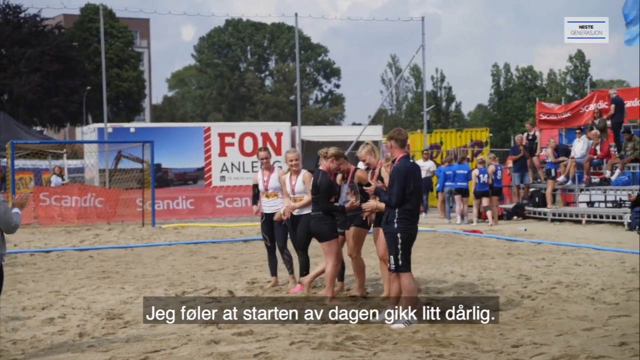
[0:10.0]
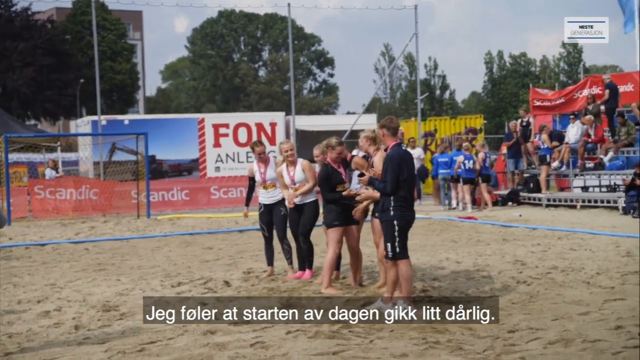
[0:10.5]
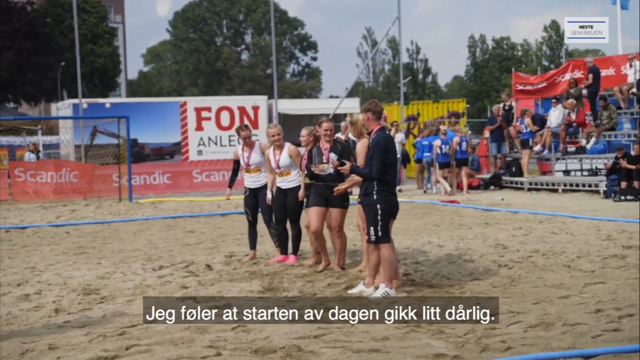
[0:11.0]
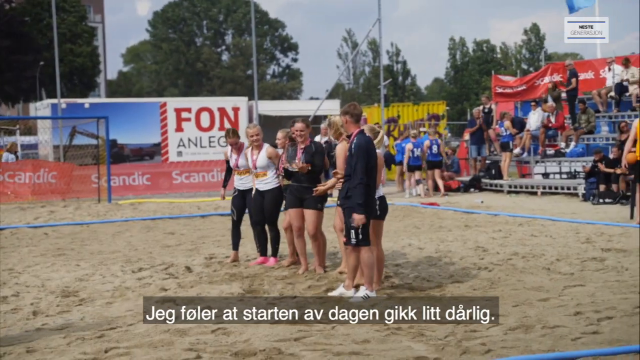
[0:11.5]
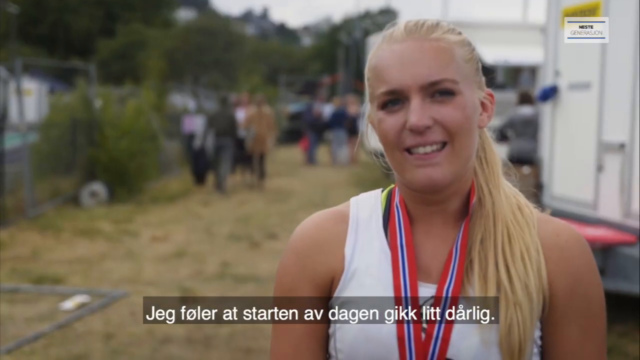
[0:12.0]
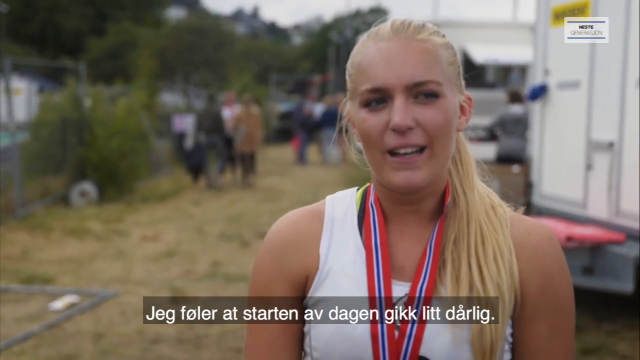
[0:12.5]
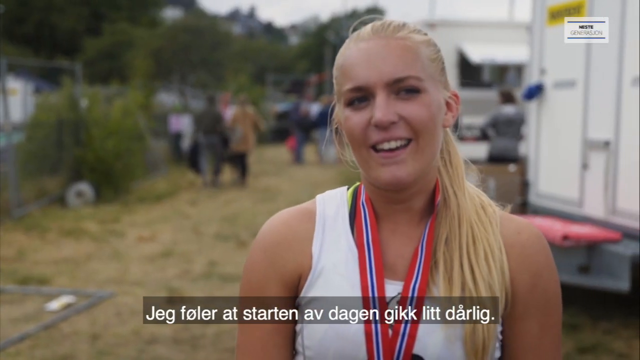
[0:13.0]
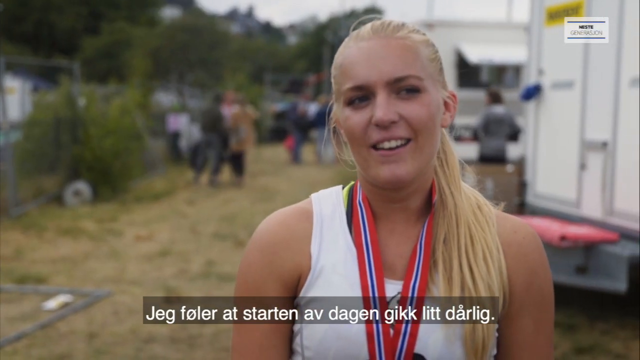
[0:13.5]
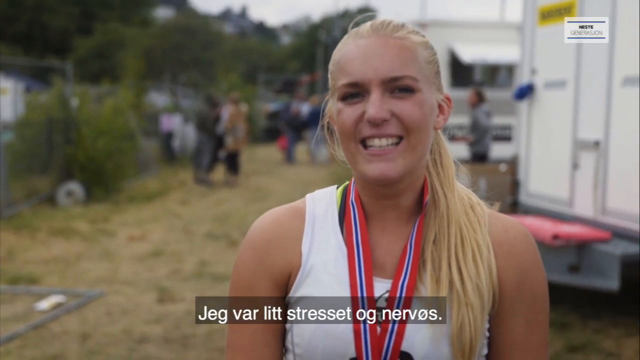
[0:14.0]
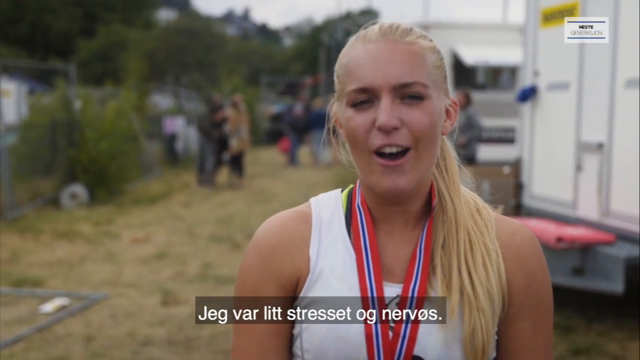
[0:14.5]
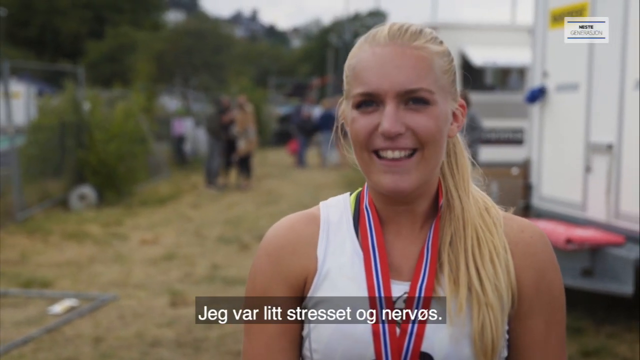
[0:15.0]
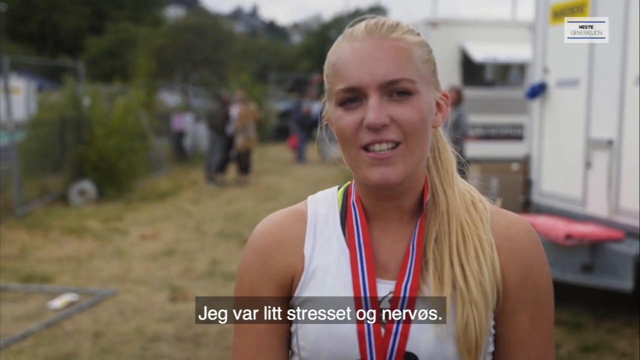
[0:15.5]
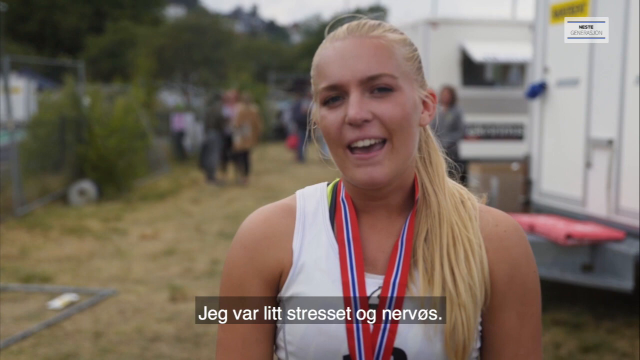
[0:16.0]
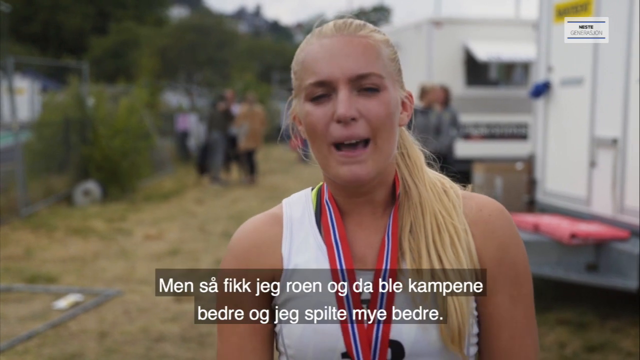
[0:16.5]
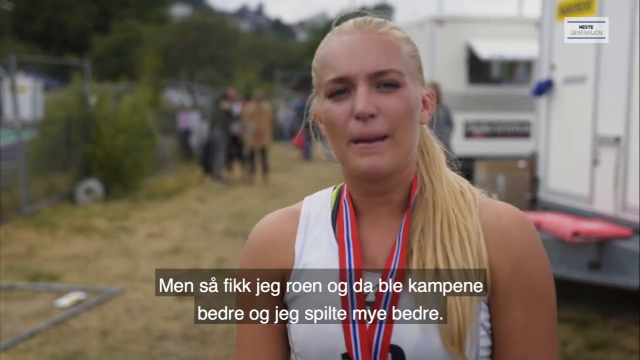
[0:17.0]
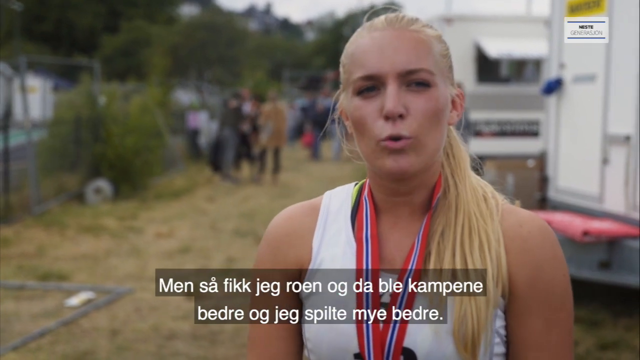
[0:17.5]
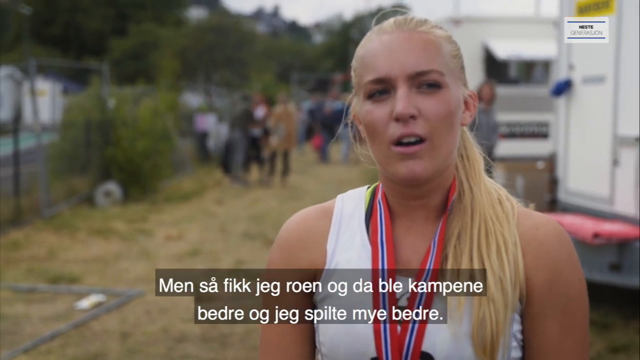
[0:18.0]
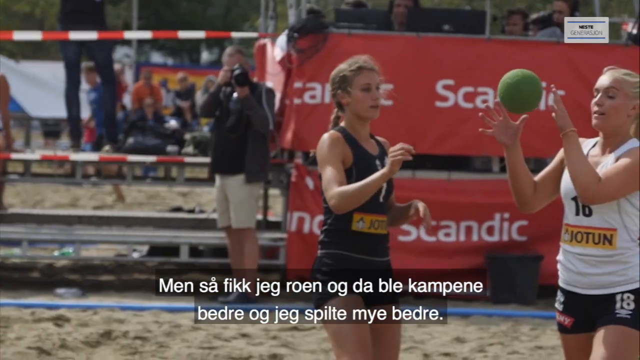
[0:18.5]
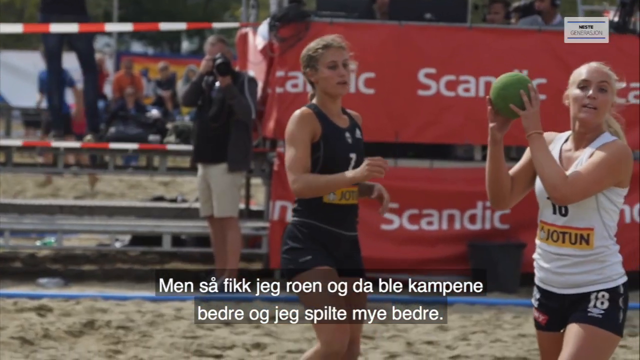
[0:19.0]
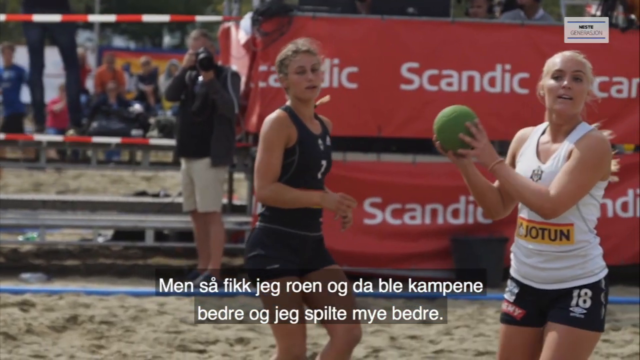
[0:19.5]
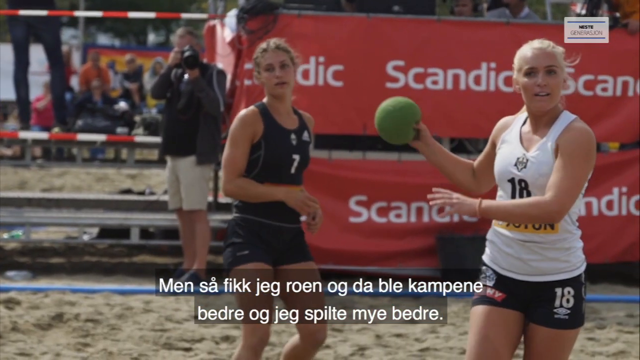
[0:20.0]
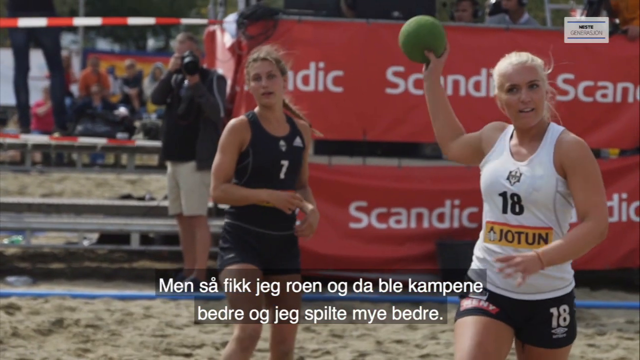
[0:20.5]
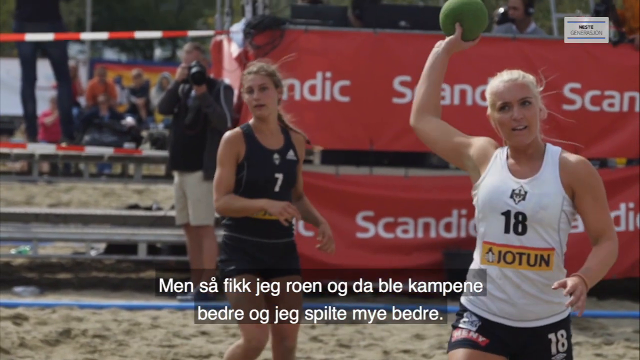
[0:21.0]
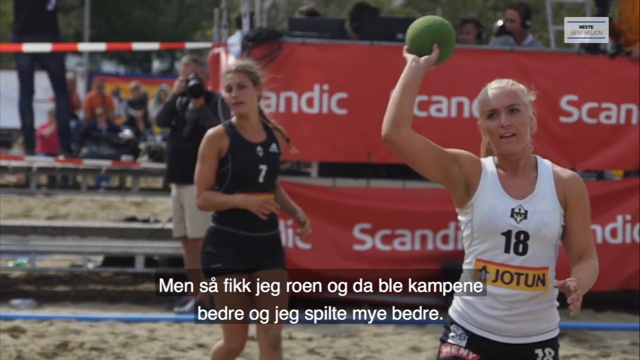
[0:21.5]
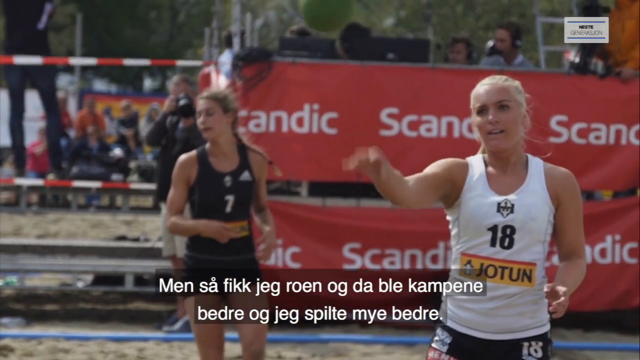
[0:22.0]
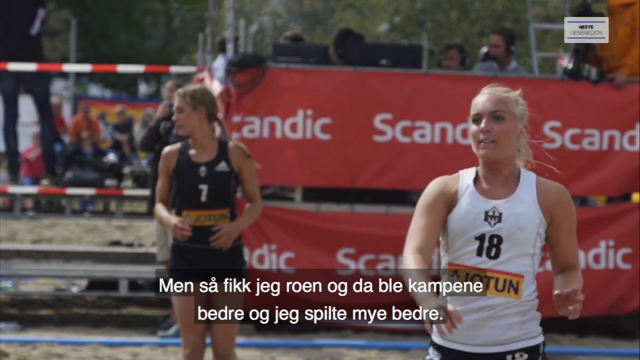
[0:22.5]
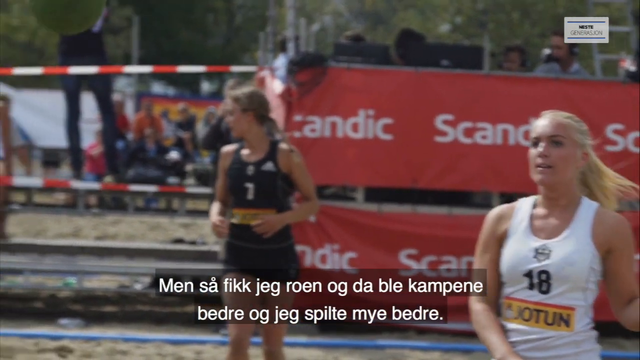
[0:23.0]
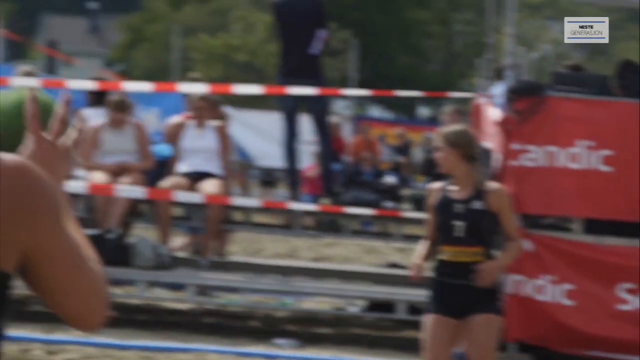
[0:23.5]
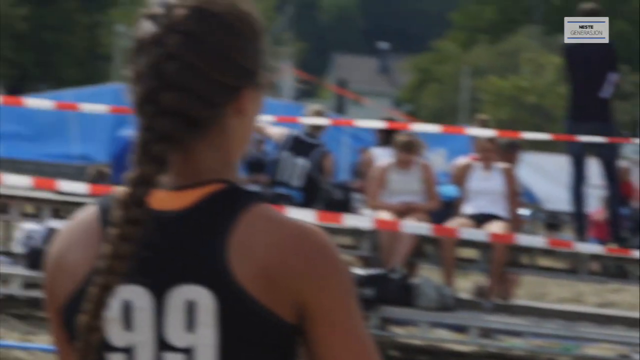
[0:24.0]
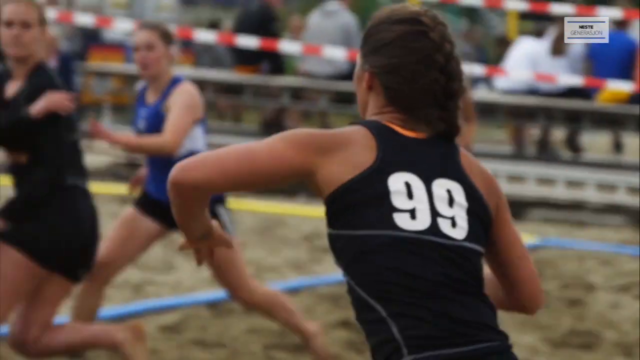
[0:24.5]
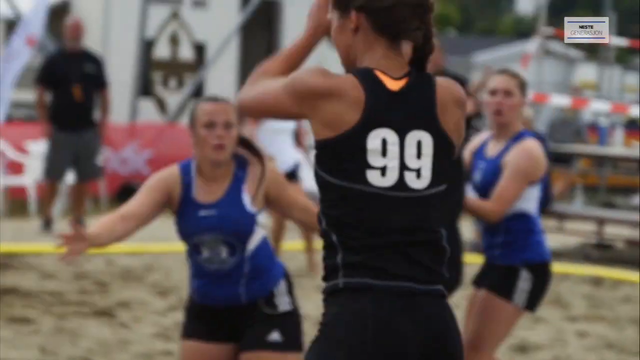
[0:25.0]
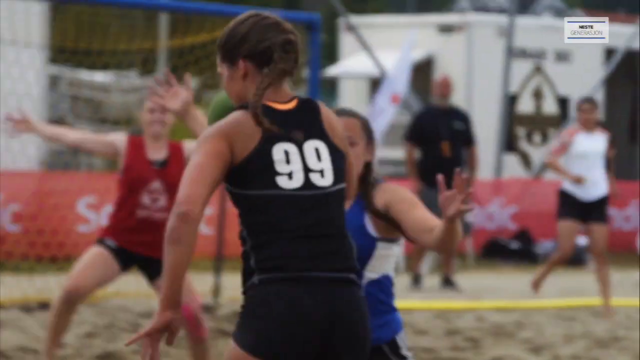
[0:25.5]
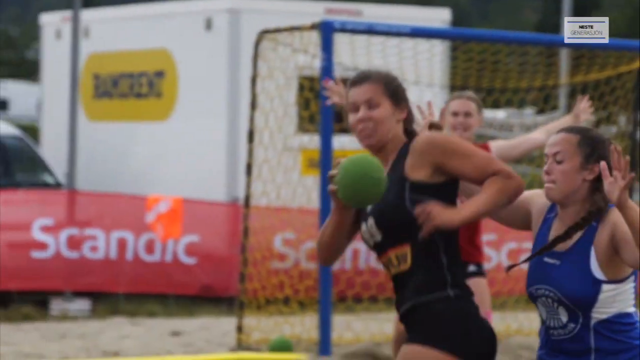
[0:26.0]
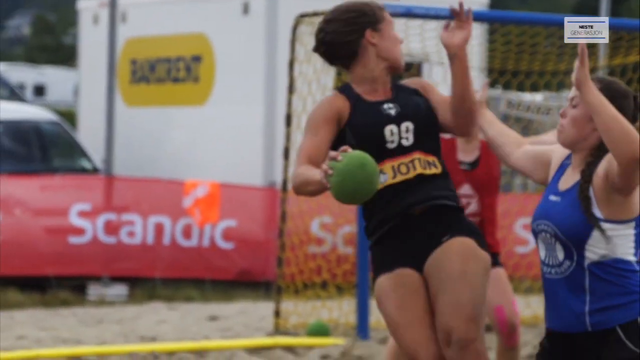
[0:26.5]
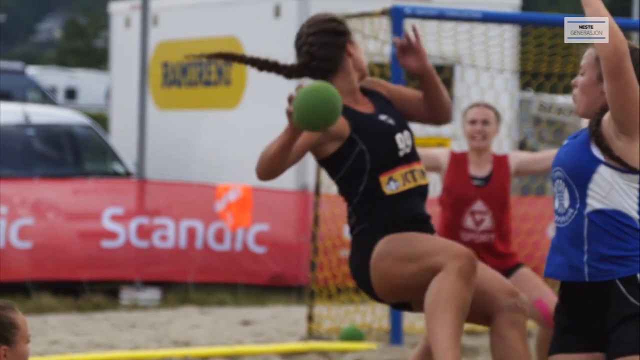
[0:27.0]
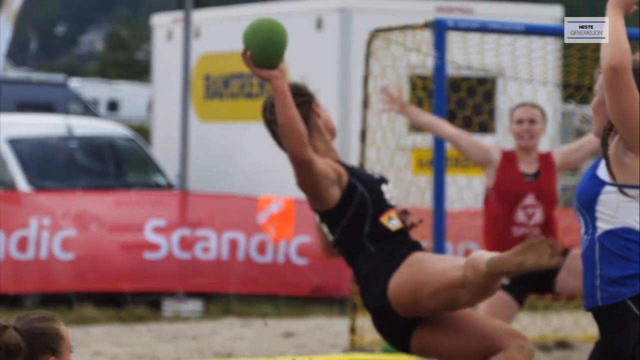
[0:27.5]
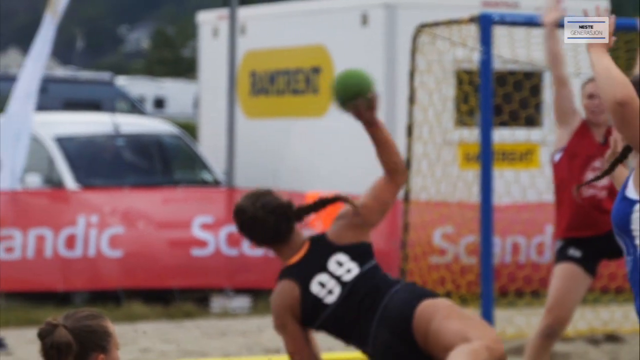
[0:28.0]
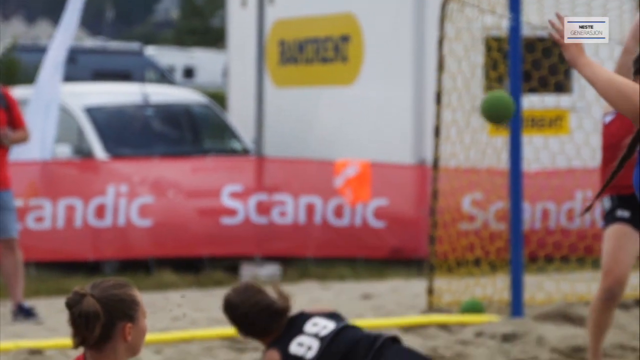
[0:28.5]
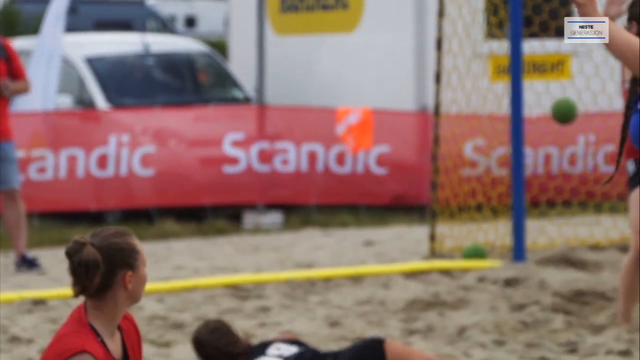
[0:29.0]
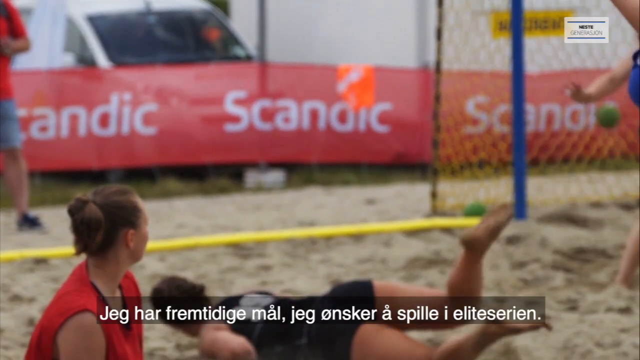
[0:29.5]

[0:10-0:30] The guys on the team accept the trophy, and then it passes to a woman with long blonde hair. She wears a white shirt that says "Jotun" with the number 18. She talks, apparently about her experience, and wears a medal around her neck that is red with blue and white trim. The scene then changes to previews from a game. She is shown with a green ball in her hand, throwing it as she plays. Her teammates wear black, so she probably plays a different position, since she wears a different shirt color. The team appears to score a goal or point when the green ball, thrown by another player on the team, goes into the net.